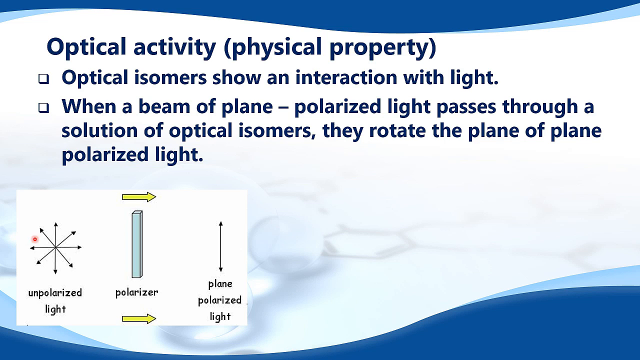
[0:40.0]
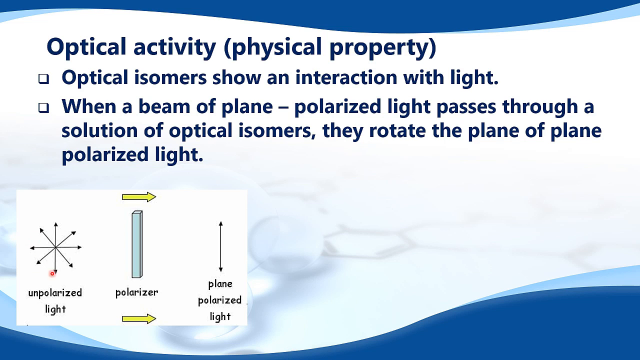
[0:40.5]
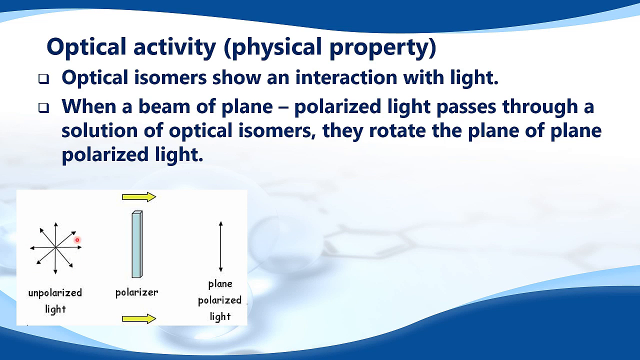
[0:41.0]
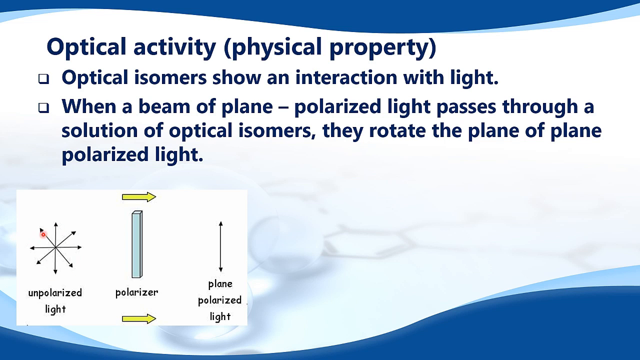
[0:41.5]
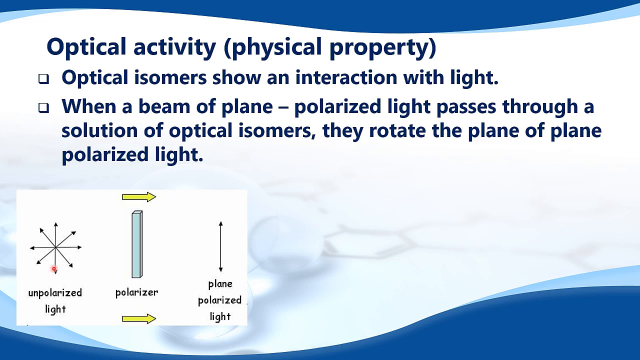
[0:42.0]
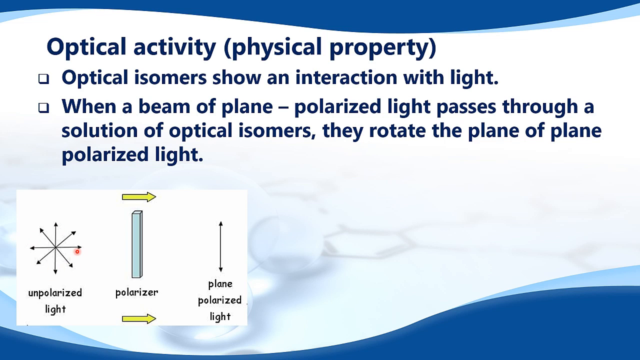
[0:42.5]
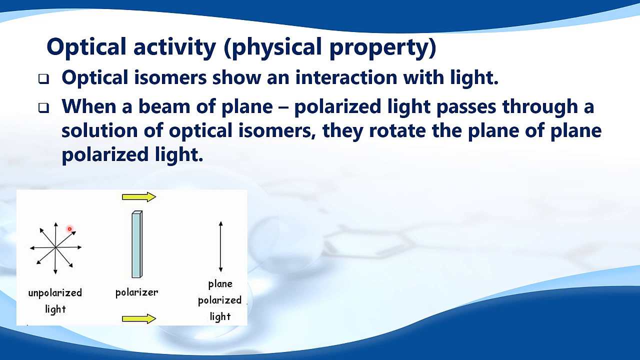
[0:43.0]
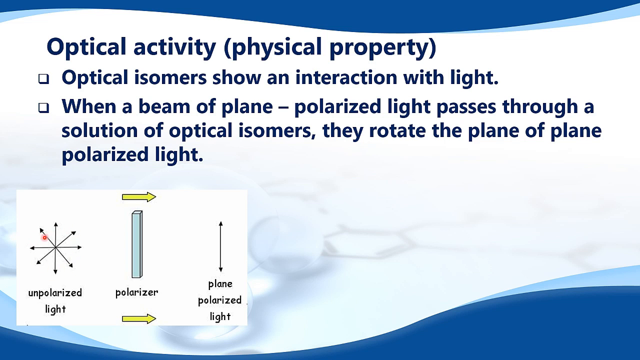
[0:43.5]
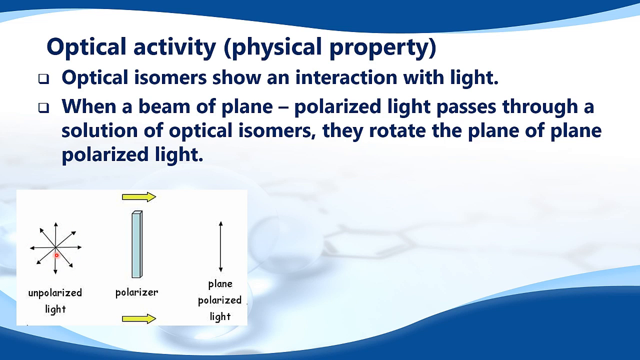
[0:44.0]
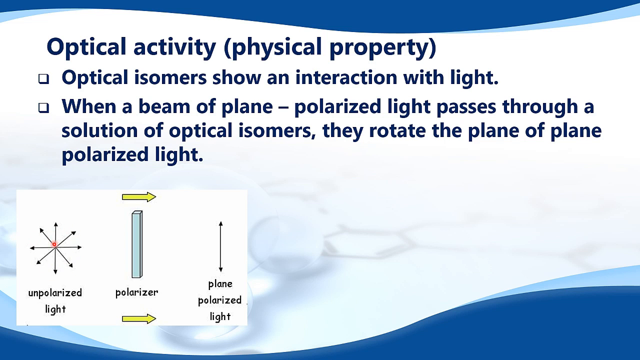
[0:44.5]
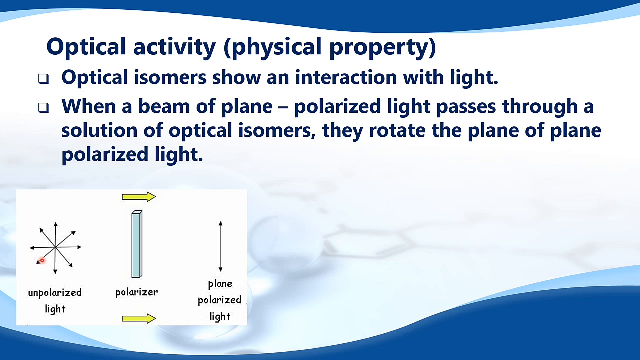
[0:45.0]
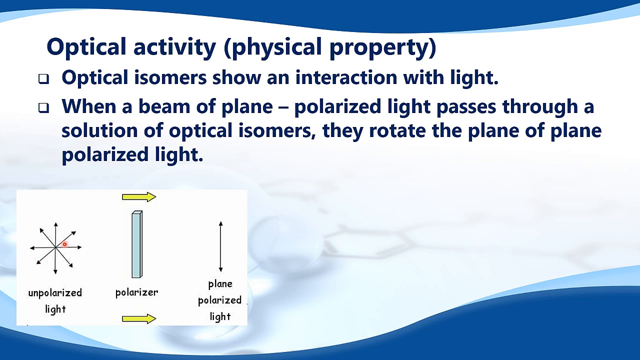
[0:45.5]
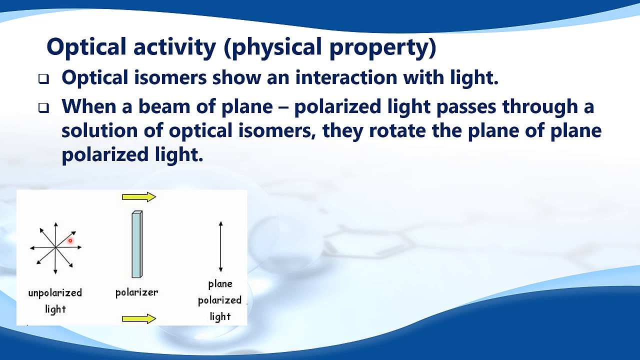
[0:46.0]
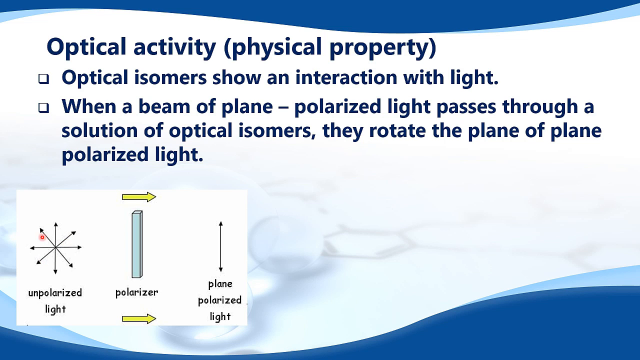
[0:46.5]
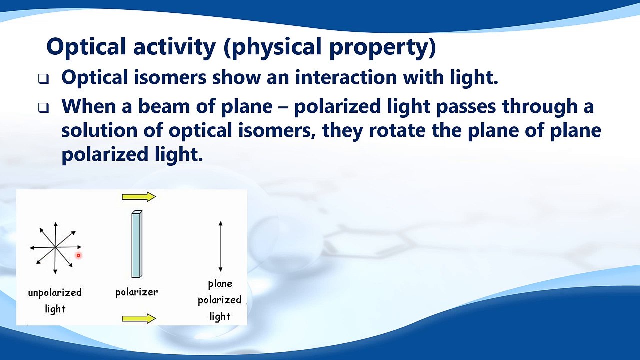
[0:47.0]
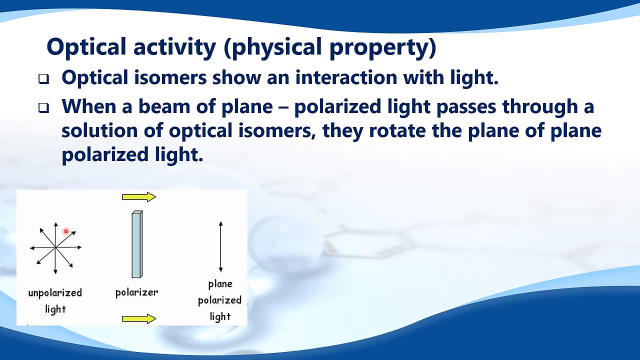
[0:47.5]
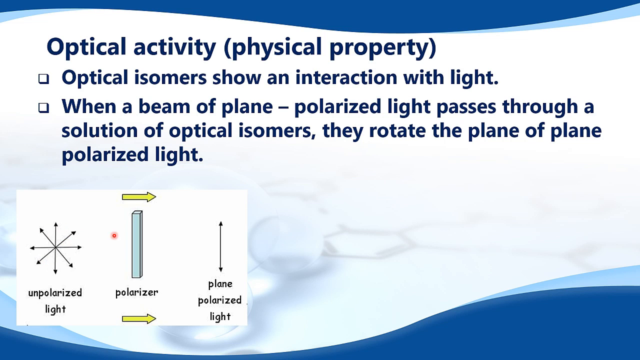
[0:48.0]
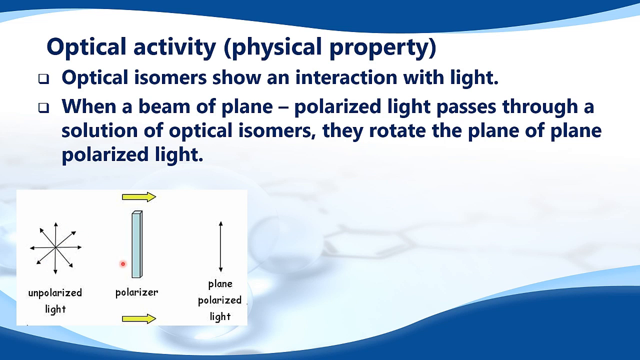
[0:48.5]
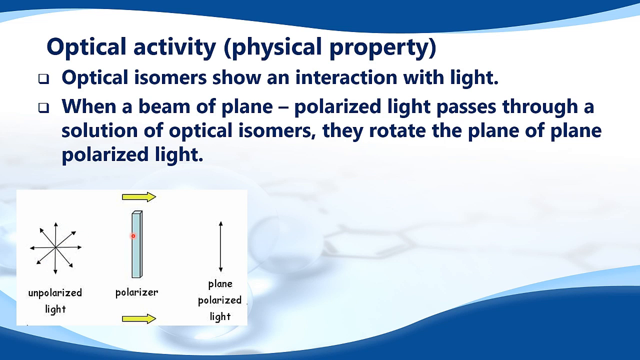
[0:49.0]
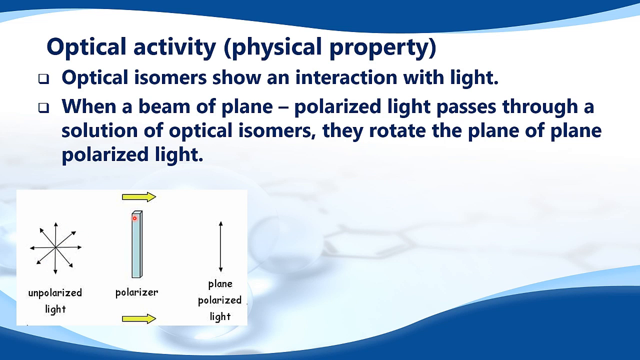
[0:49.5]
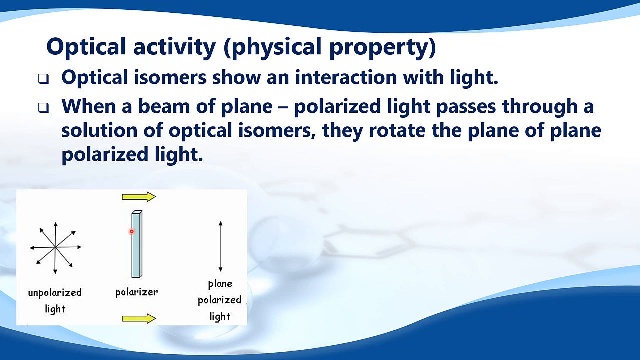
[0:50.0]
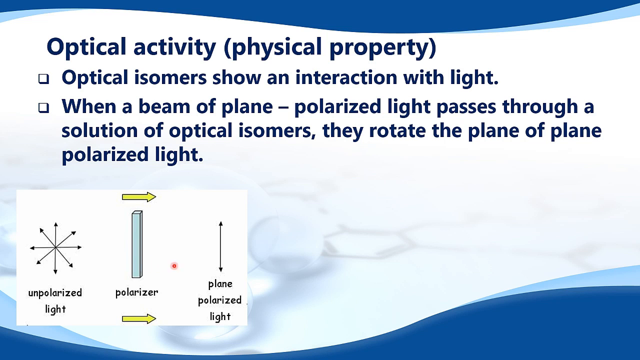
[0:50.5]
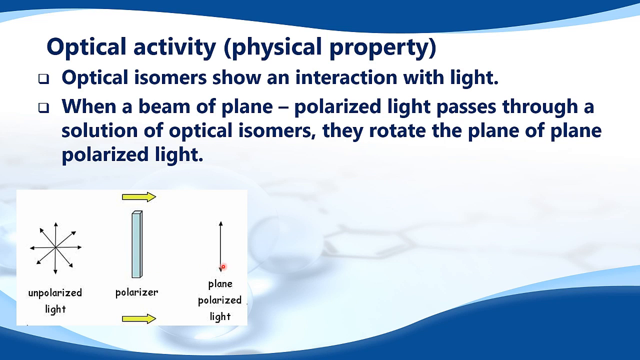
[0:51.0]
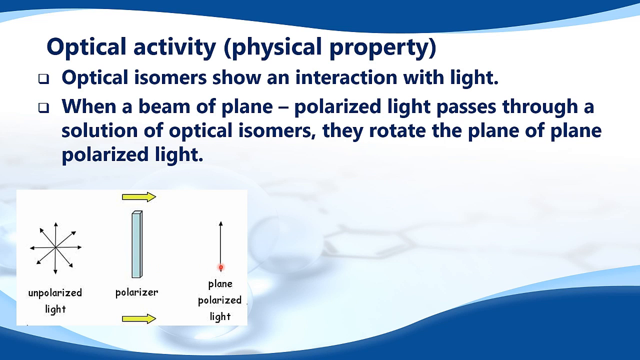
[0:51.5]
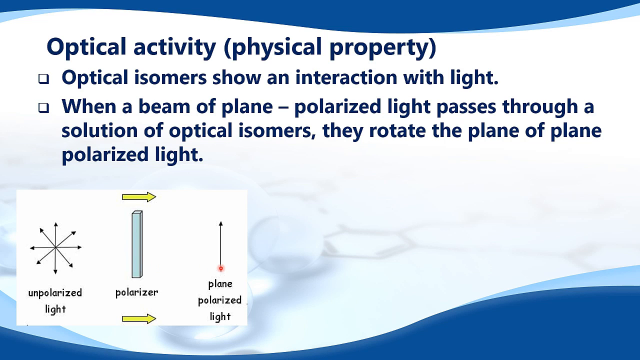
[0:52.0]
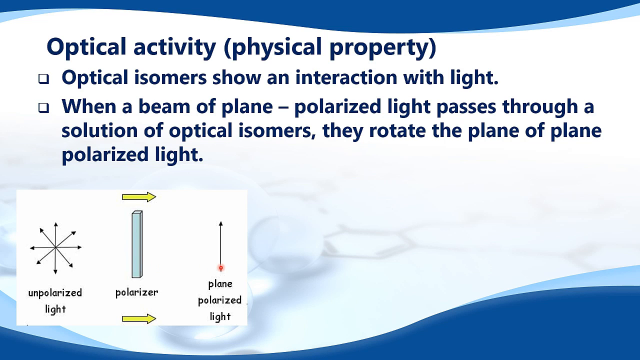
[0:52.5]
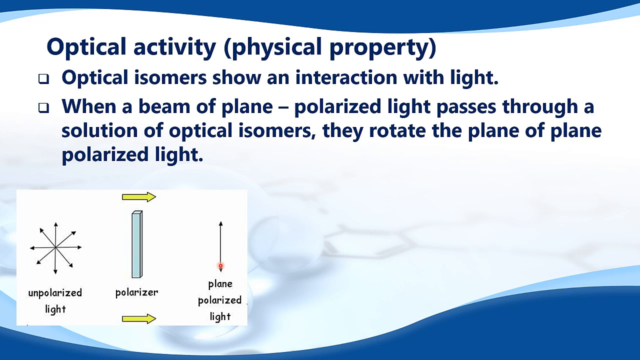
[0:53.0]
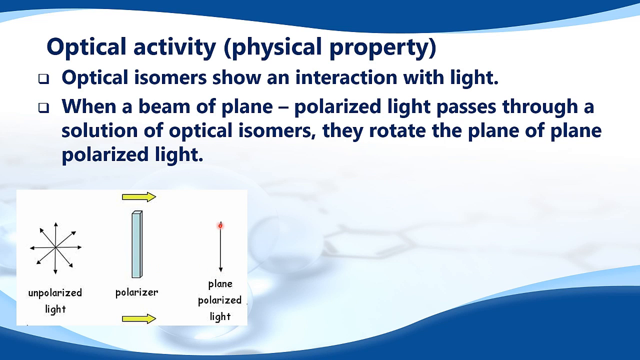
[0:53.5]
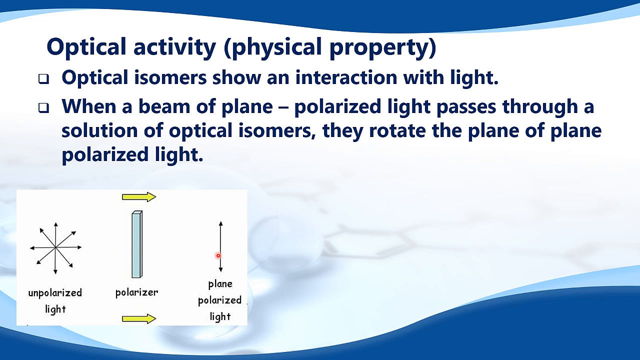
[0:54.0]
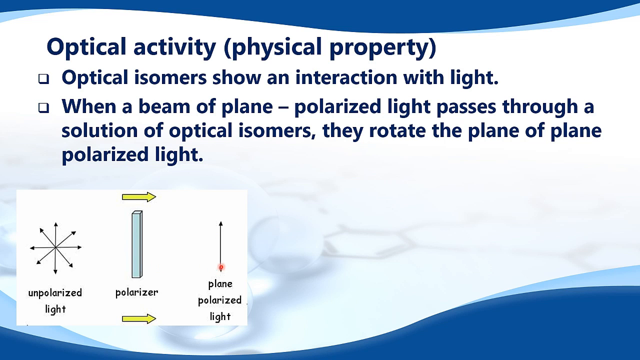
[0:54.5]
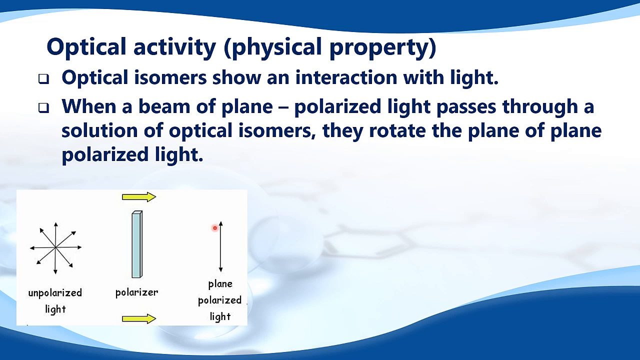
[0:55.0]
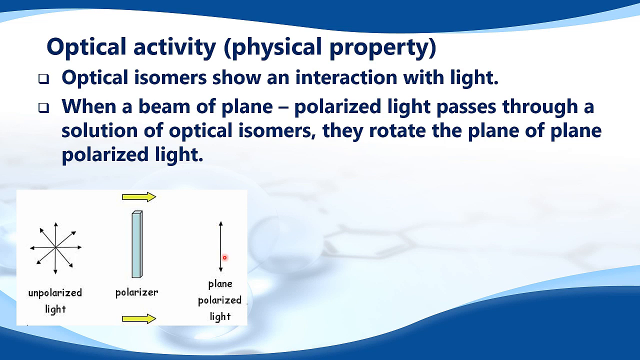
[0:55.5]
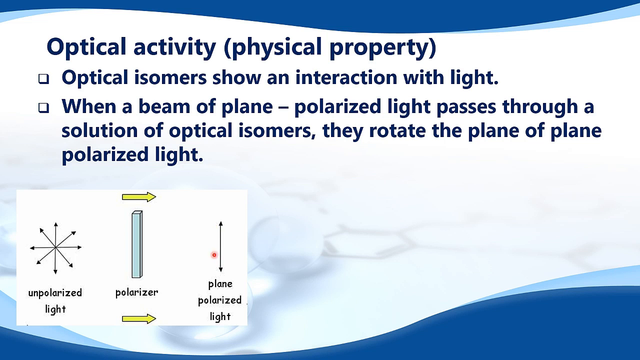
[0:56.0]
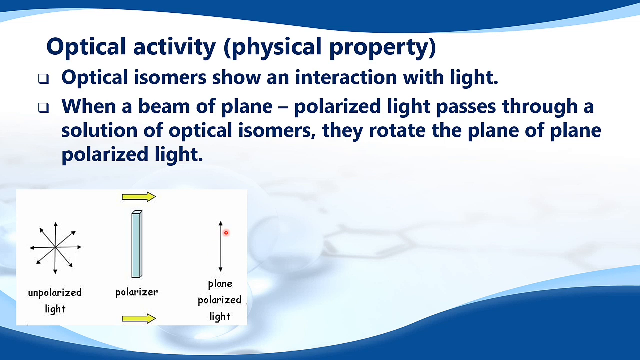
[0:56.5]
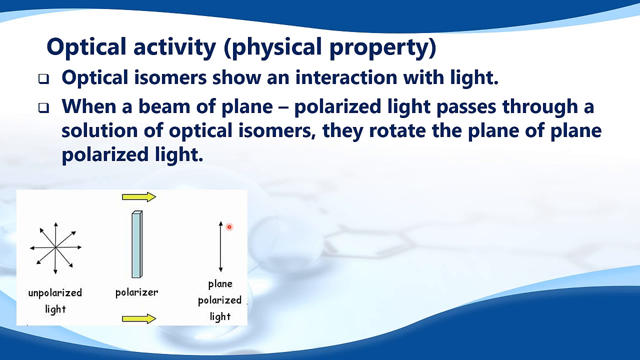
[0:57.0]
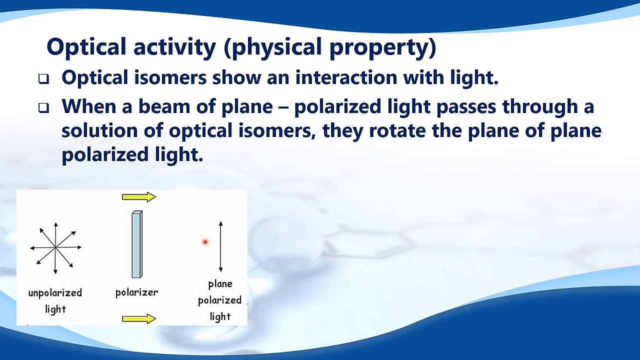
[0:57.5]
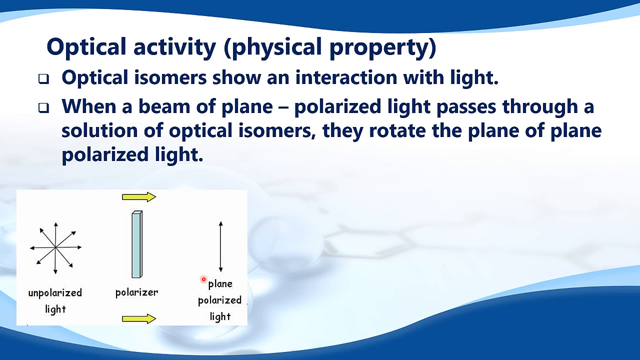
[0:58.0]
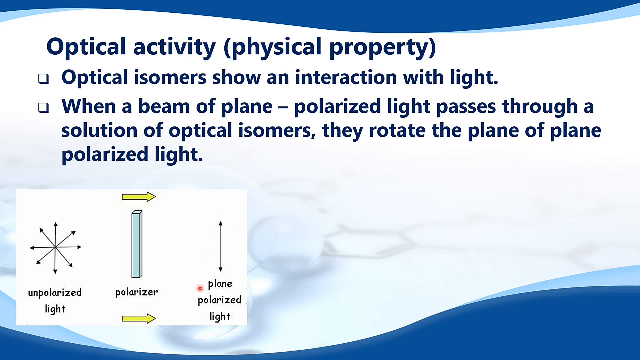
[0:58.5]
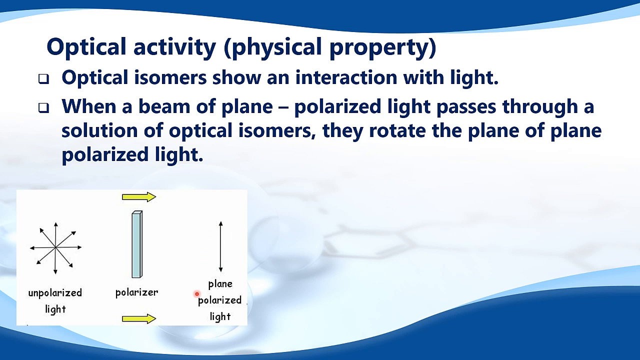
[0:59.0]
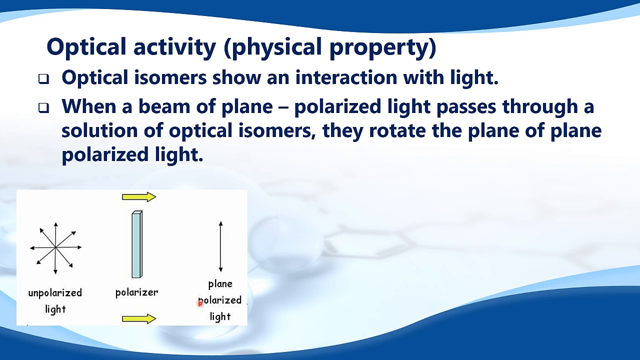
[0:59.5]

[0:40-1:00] The orange dot moves around through the illustration, kind of rotating around the black star of lines with arrows on each end, then going over to the vertical bar, then to the single line with small arrows at the top and bottom. Nothing else changes: the white background, the blue waves at the top and bottom, and the contact-lens-like pattern remain. The yellow arrows are outlined in black and both point to the right, and the bar is kind of made to look three-dimensional. All of the black label text is lowercase. The black arrowheads at the ends of the little black lines are very small. The unpolarized light illustration has a vertical line, a horizontal line, a diagonal running from upper left to lower right, and one going the opposite way, all kind of equal-length black lines with arrows on either end.